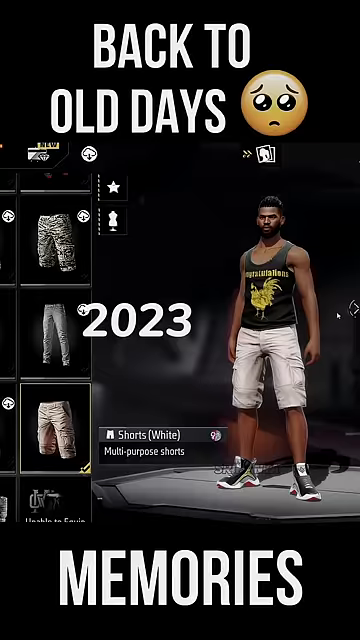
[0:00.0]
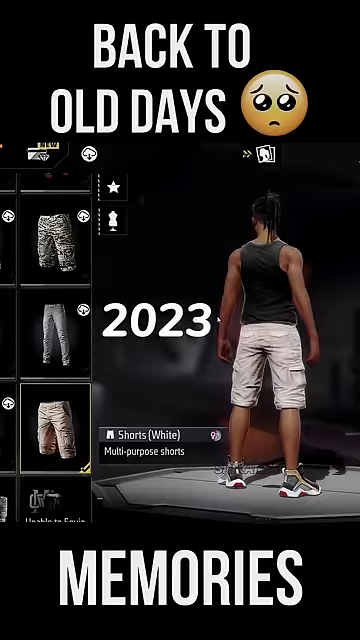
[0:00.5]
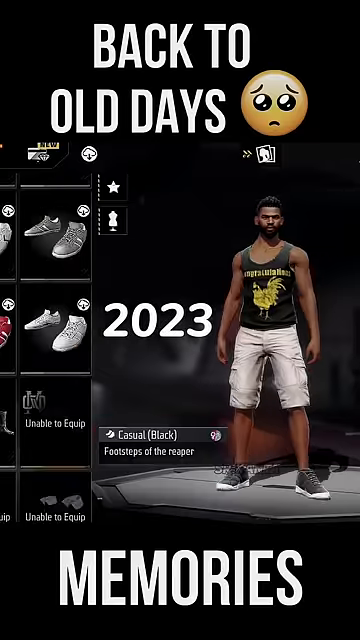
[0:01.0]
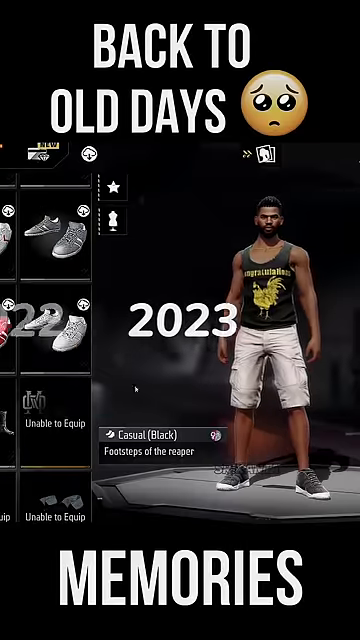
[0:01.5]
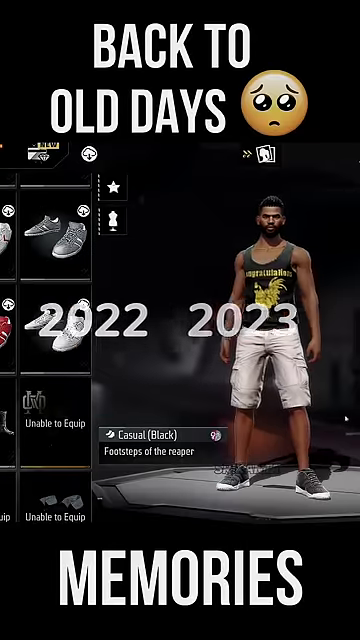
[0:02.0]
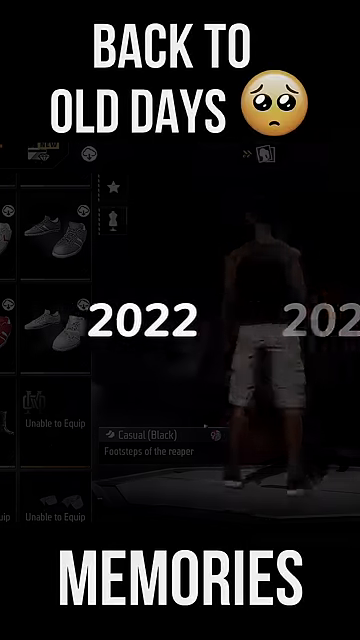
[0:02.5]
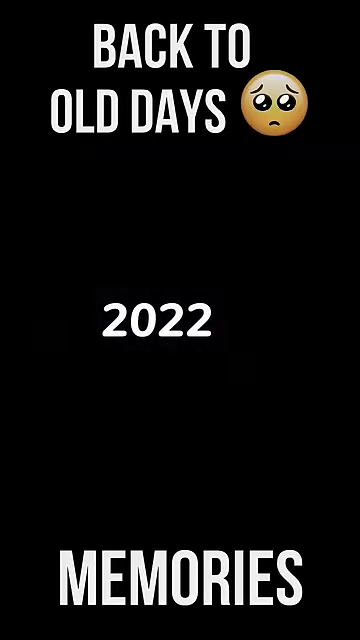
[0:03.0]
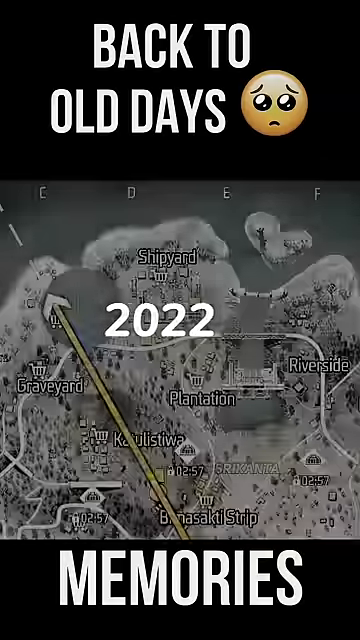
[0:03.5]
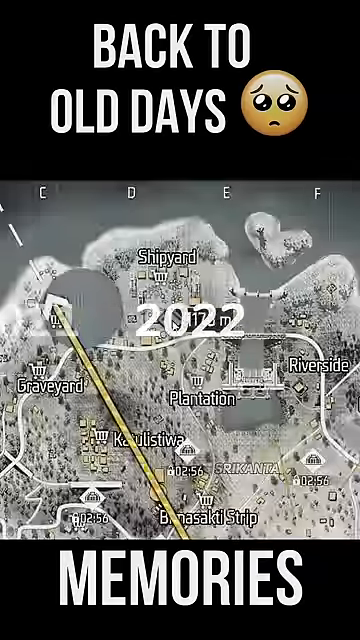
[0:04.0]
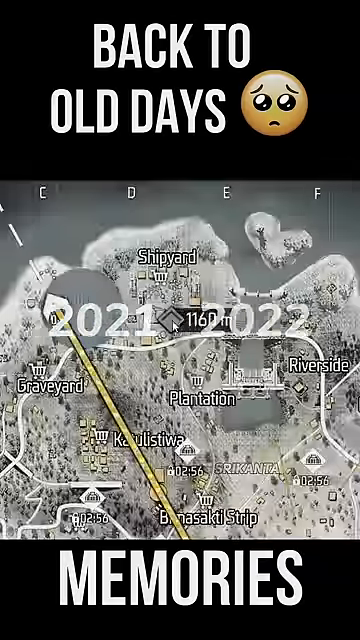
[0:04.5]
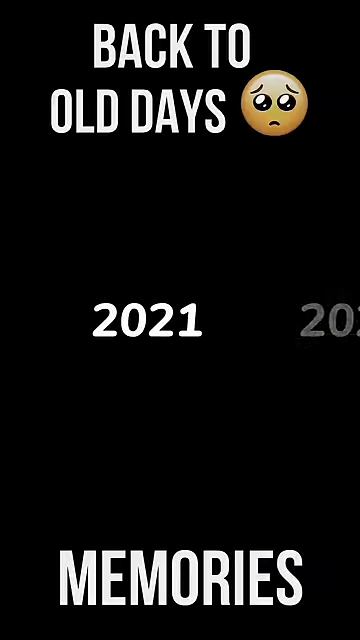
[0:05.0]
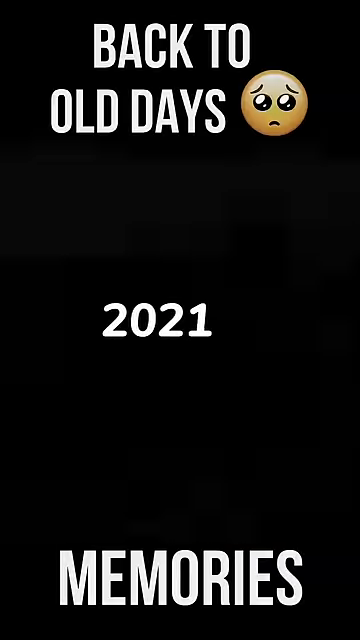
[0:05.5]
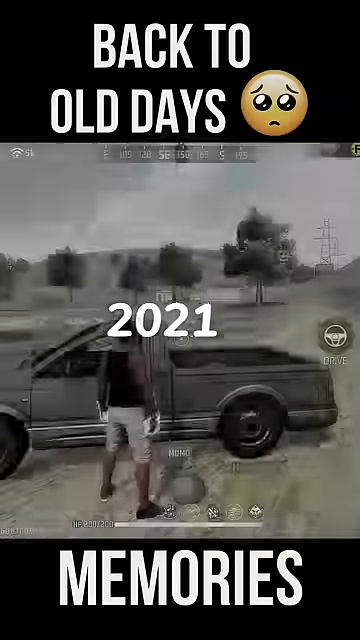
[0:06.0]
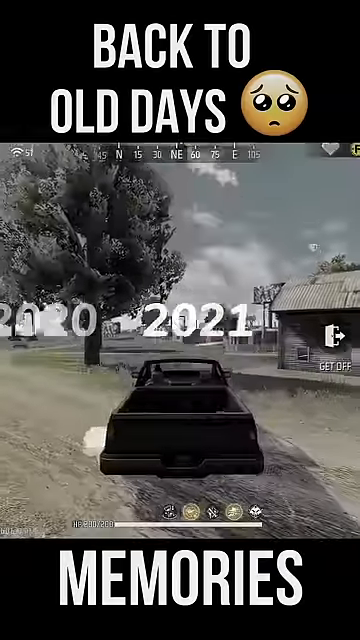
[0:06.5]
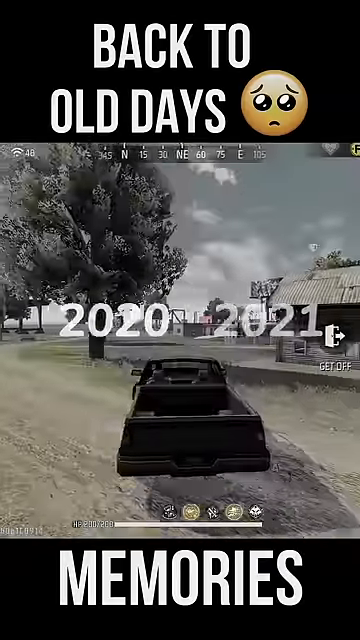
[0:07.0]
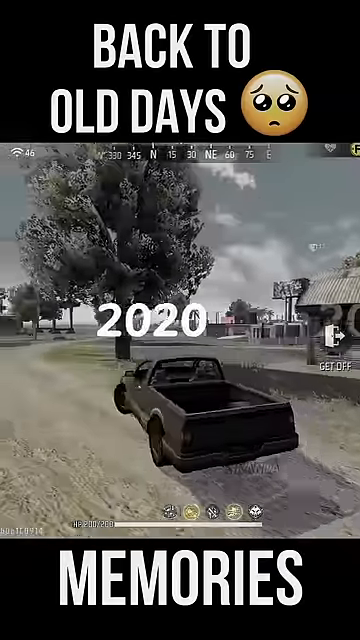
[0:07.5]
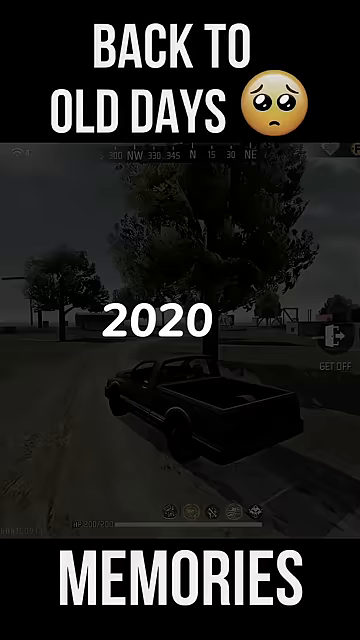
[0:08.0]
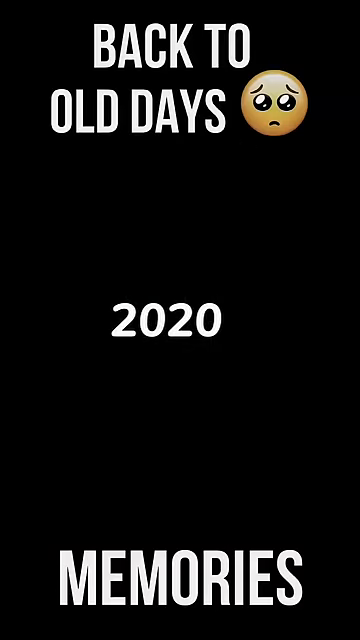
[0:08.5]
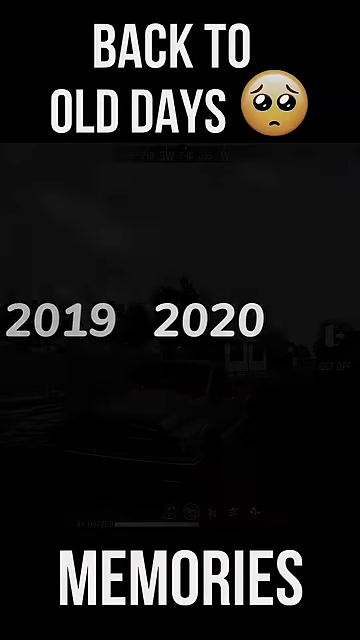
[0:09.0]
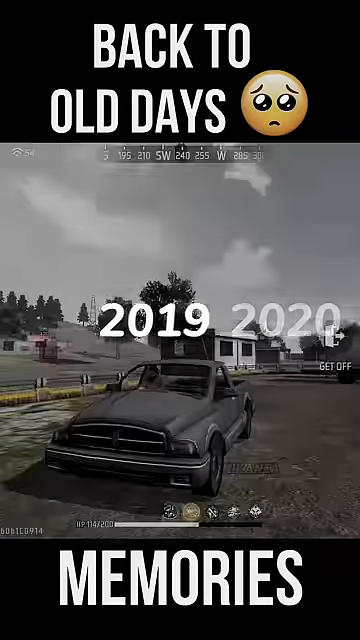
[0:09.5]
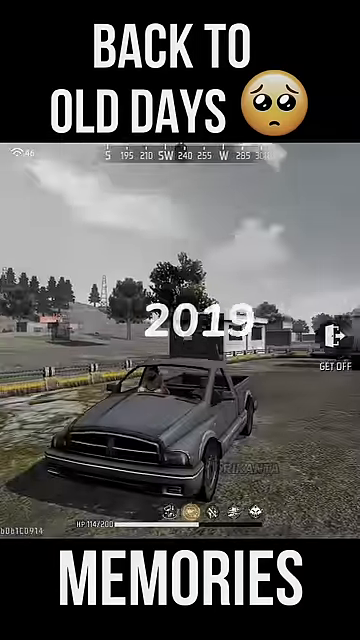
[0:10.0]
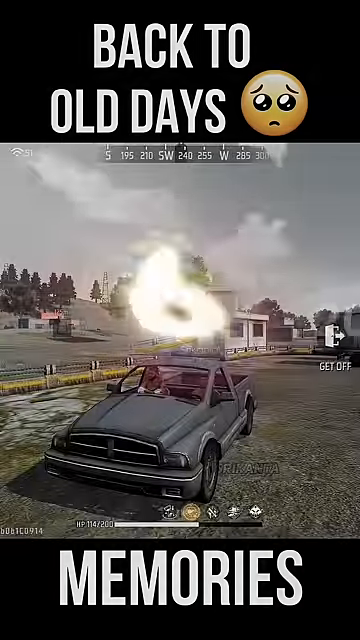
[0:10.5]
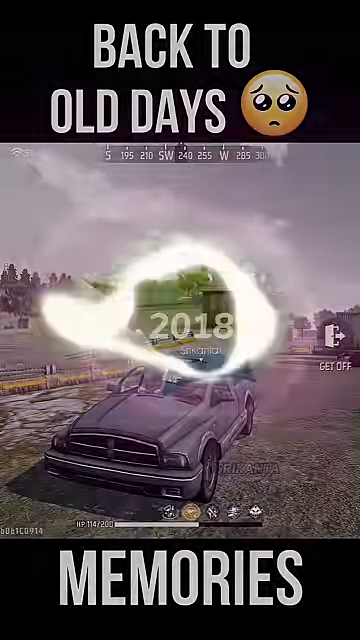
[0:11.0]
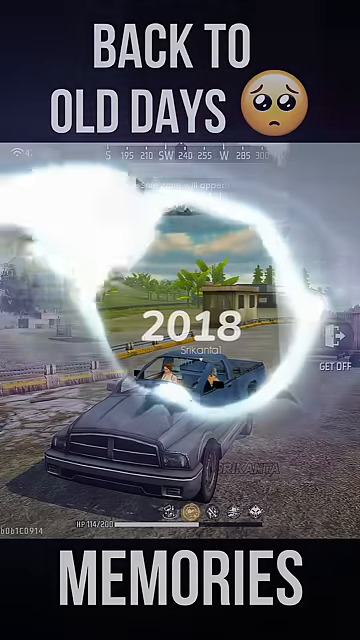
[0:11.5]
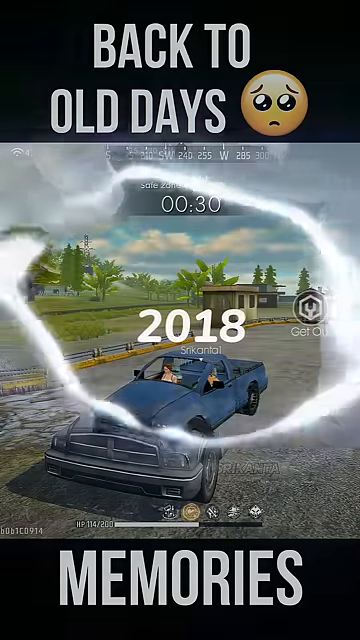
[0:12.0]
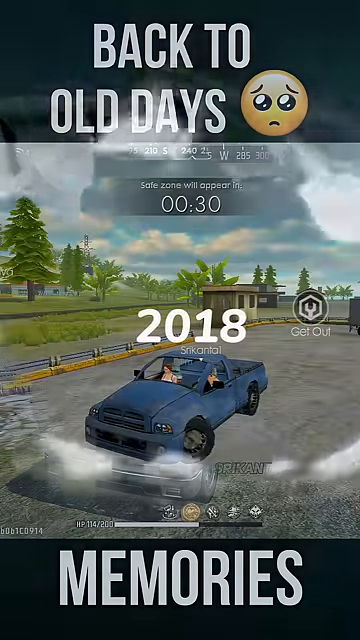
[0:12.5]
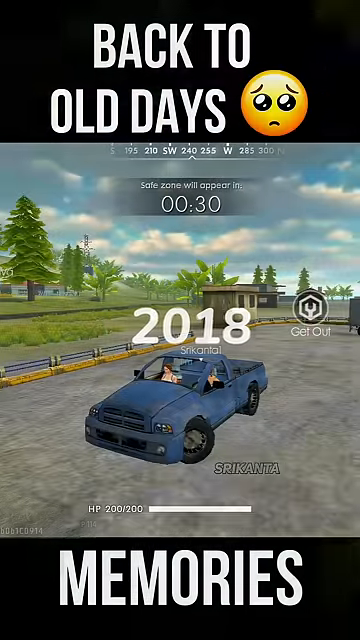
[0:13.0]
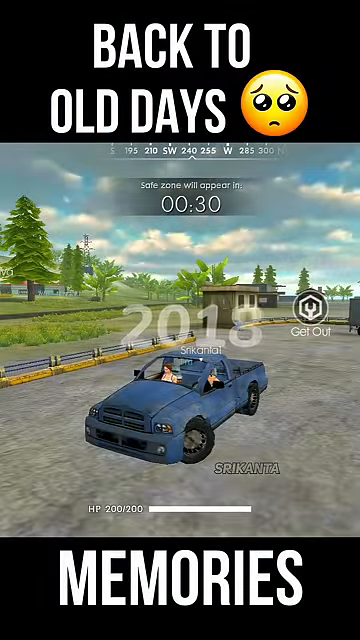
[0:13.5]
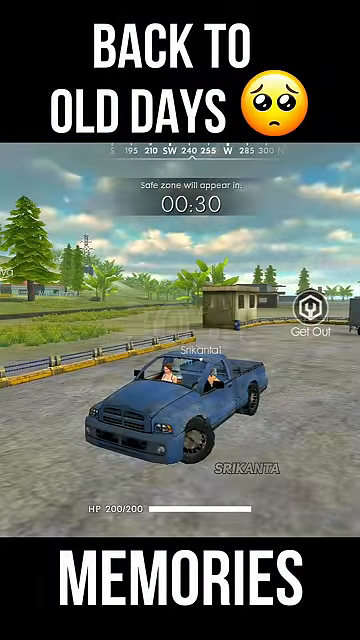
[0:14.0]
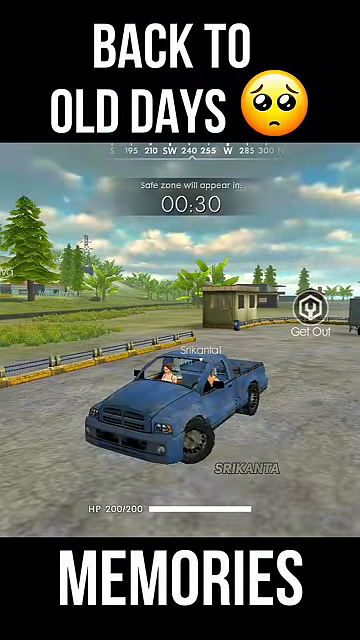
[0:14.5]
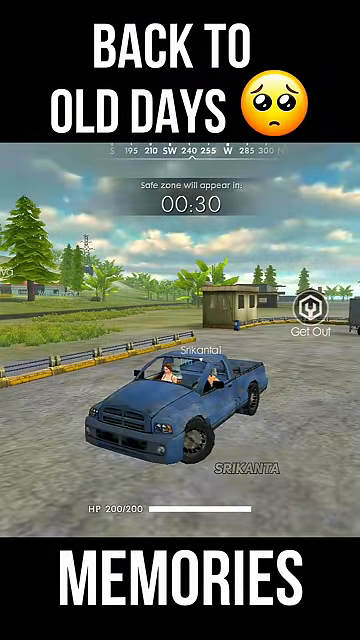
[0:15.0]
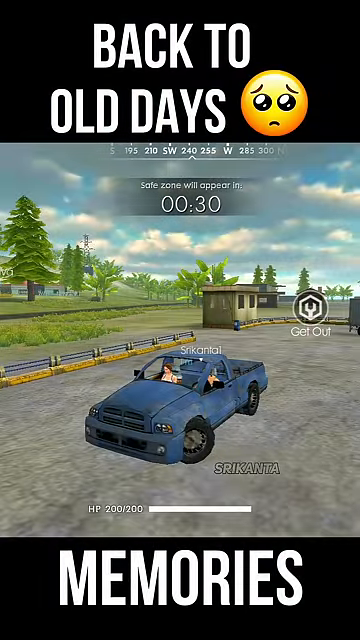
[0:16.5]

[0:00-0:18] The video is titled Back to Memories, Old Days. It opens on a dark-complexioned African American figure who looks like a professional athlete and appears to be wearing a jersey, specifically something like a basketball jersey, with knee-length shorts that are somewhat baggy, like cargo shorts. The figure spins around. The scene starts as if it is 2023. The figure spins, and clothes can apparently be put on this person, so it looks like some sort of video game. A map follows, possibly showing where the player wants to go or has been. Every few seconds the year steps back from 2023 to 2022, 2021, 2020, 2019 and 2018, apparently showing where the player has been on the map and the vehicles they drove around town. The locations look like rural areas. The video does not show what they are doing, only where they have been and which vehicles they used over the years, so it seems to be a recap of their experiences in the game. Some images are more colorful than others, and some are black and white. The vehicle is a truck every time: sometimes moving, sometimes stationary, sometimes blue trucks, sometimes a gray truck. The setting is rural, with lots of trees, grass and road and few buildings. Sky with clouds is visible, so the scenes are outdoors.